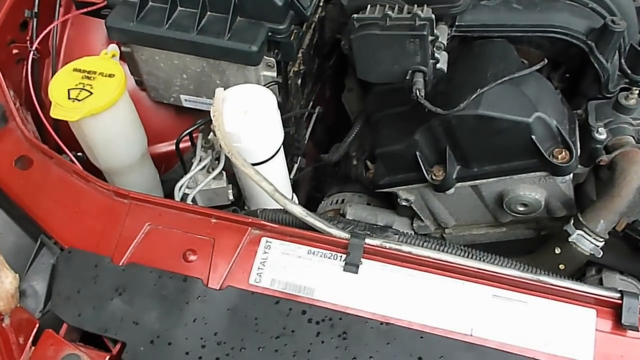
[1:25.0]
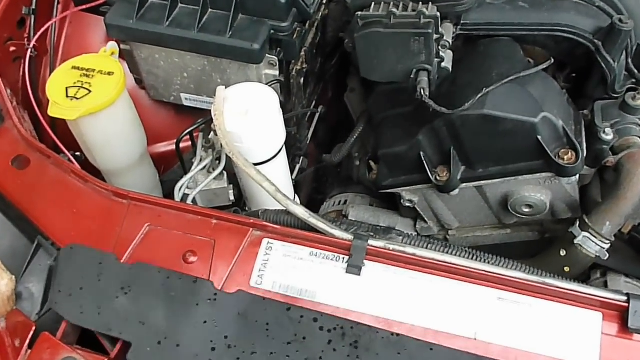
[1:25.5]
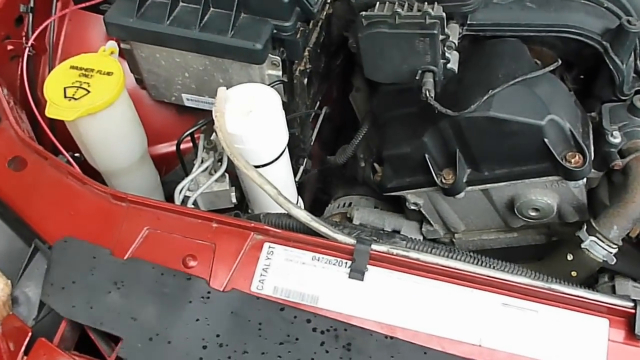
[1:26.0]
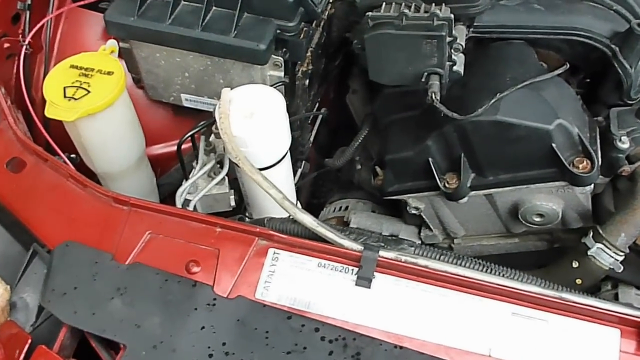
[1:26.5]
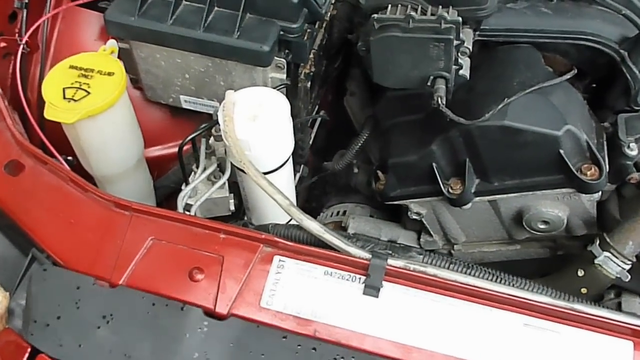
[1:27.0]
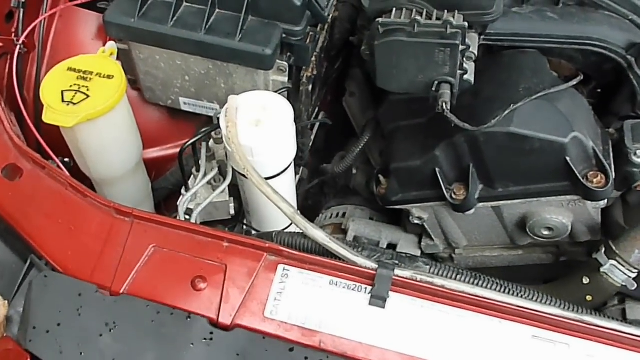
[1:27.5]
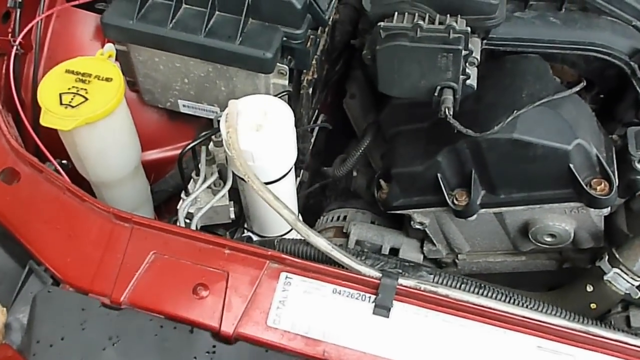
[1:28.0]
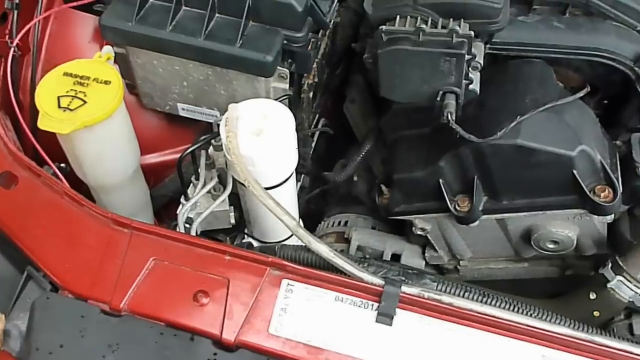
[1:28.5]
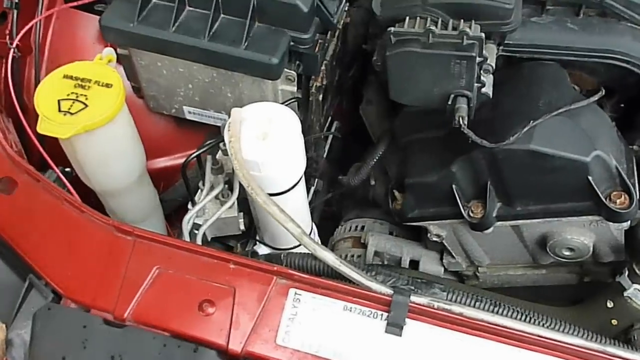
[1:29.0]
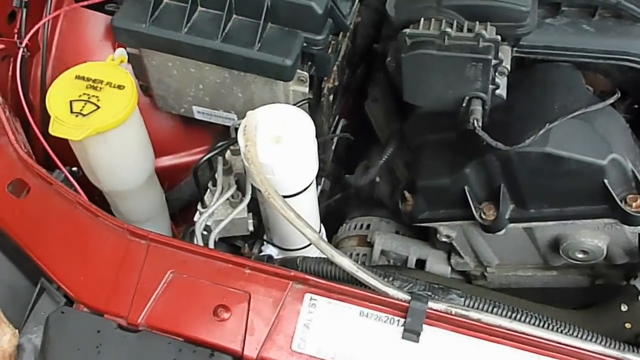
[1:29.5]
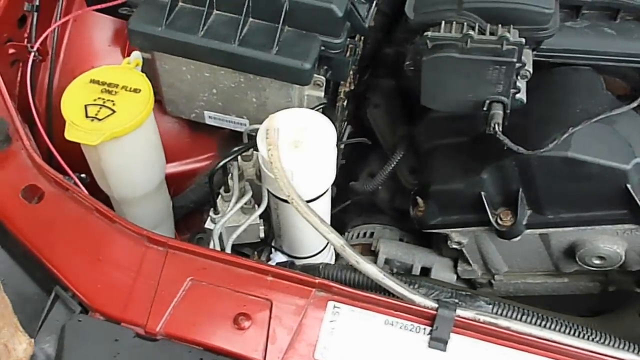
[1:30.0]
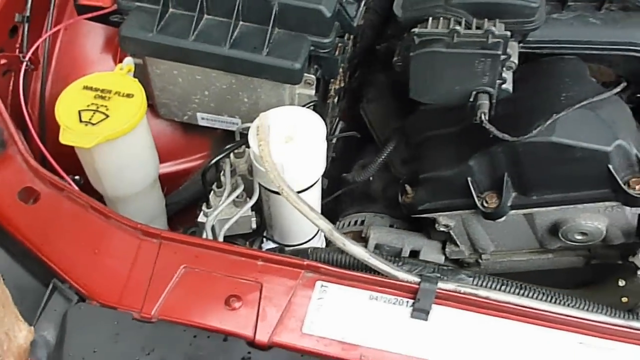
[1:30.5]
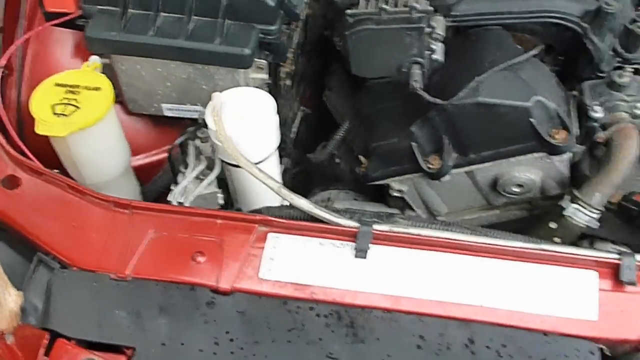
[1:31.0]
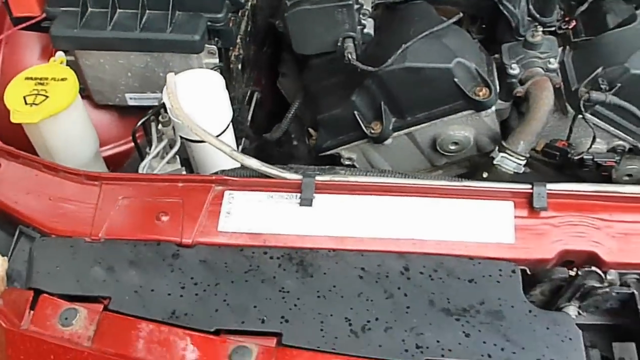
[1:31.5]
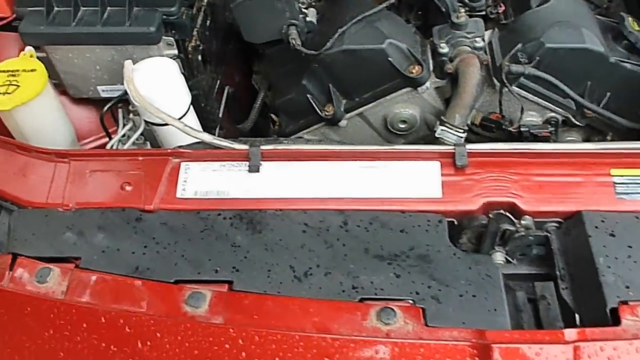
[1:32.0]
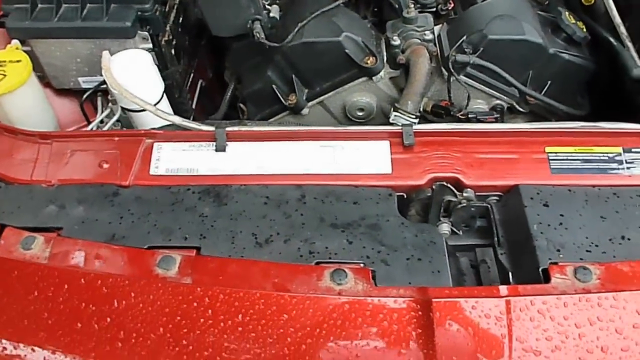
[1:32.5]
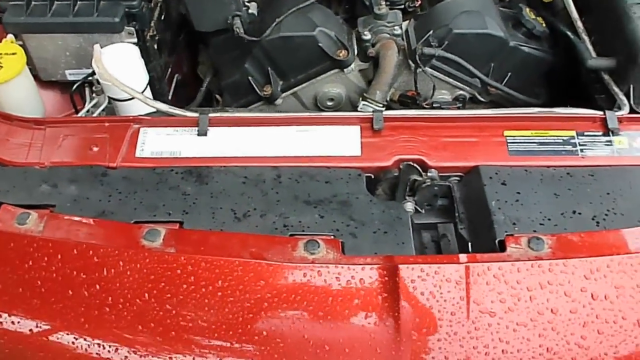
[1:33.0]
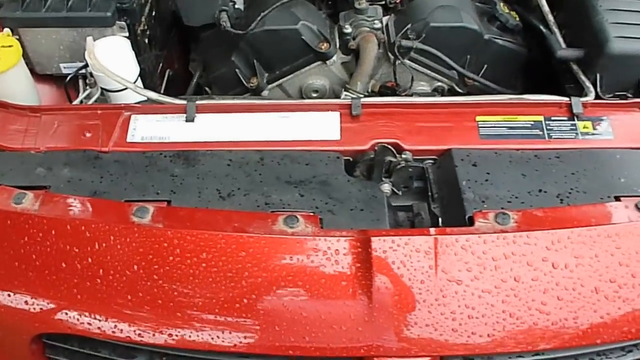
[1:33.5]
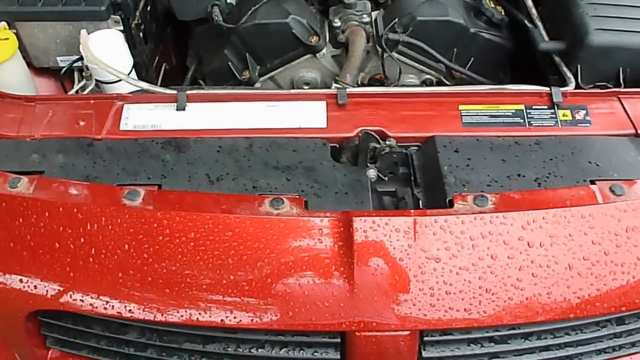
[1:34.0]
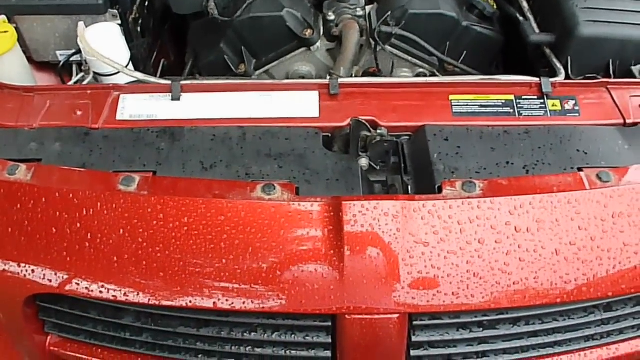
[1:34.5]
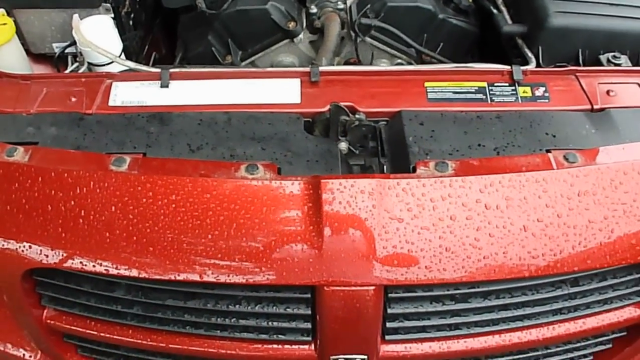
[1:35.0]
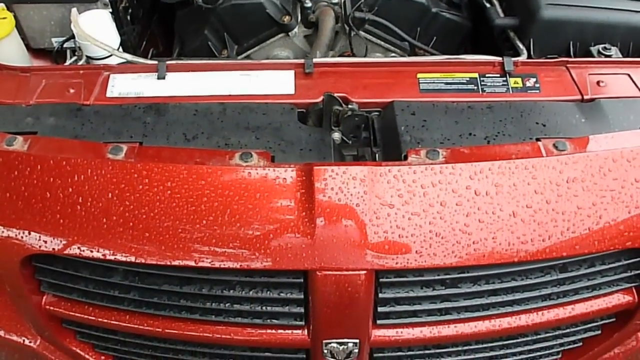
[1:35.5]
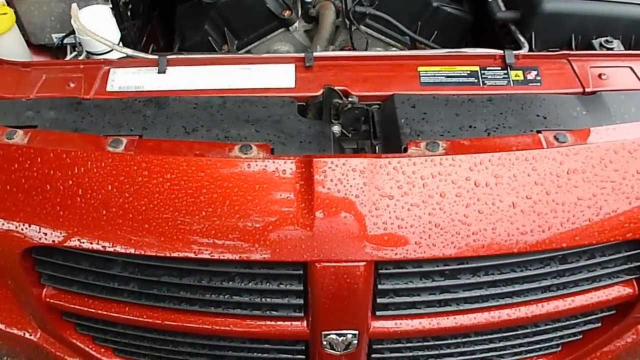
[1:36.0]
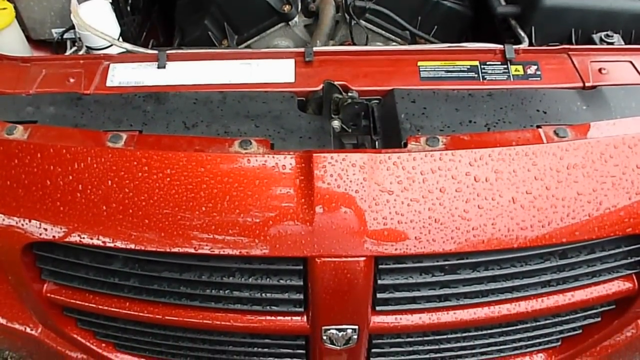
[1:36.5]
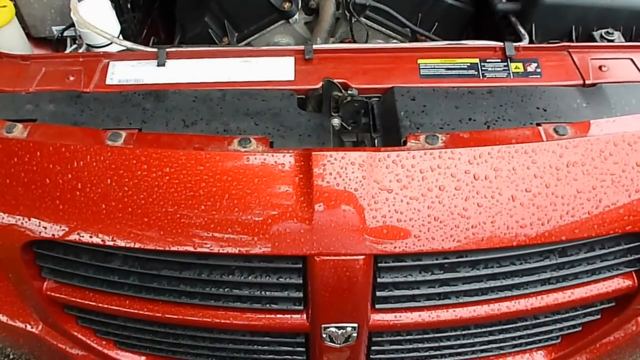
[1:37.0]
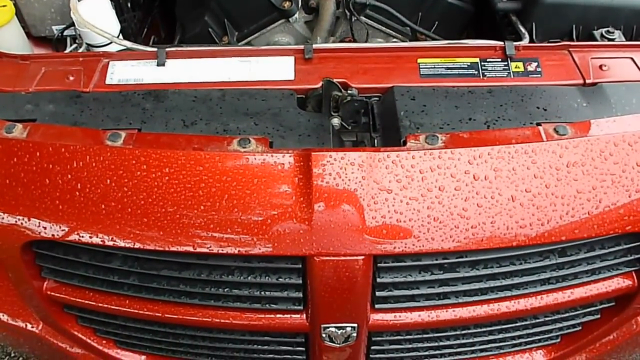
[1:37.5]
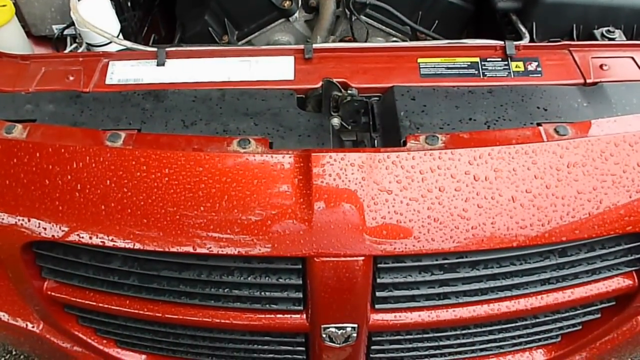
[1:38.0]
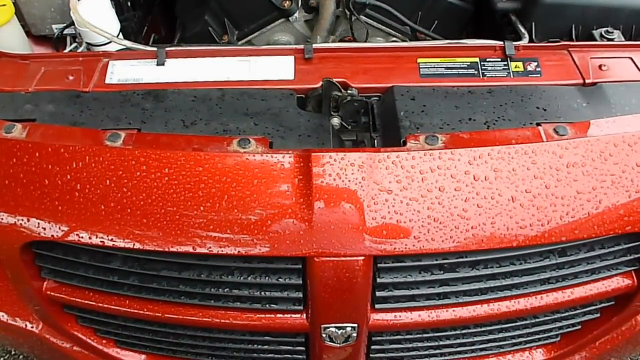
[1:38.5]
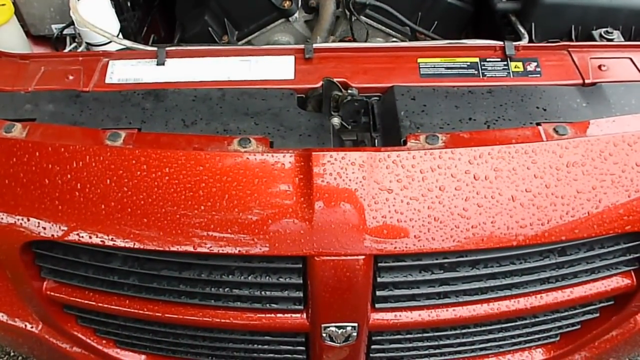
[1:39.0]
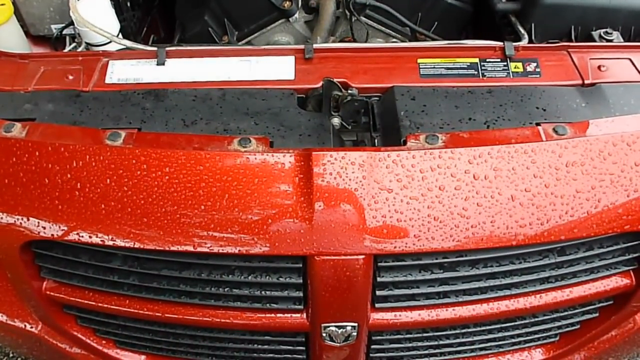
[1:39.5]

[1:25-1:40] The man fiddles with the little black panel cover. Rain is still coming down, and the exterior of the car is pretty wet with water marks, while the inside of the engine compartment, other than the front section, is quite dry. He puts the piece in place and then sort of backs up, maybe several feet, filming the front area: the Dodge logo and the black, quite beefy grille. Lens warping or rolling shutter makes the whole vehicle warp and wobble badly. The man's reflection is visible on the front end of the car, showing him holding up a phone, but no details of him can be seen because the reflective paint is heavily dotted with water droplets and distorted by the curve of the surface.